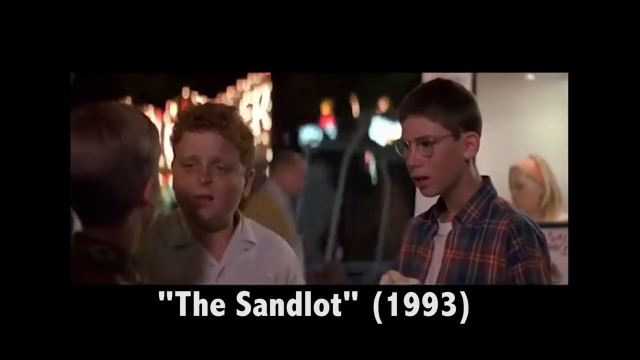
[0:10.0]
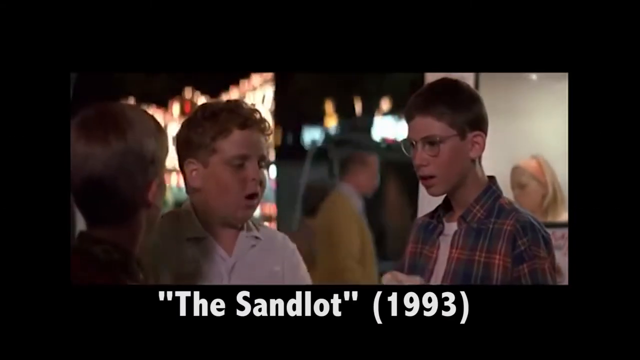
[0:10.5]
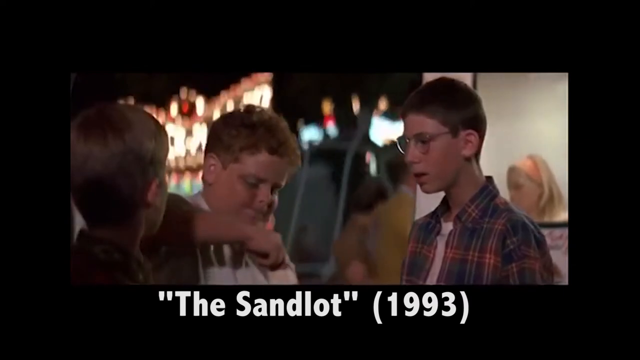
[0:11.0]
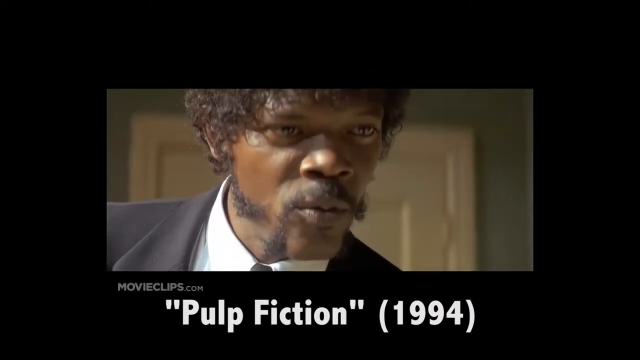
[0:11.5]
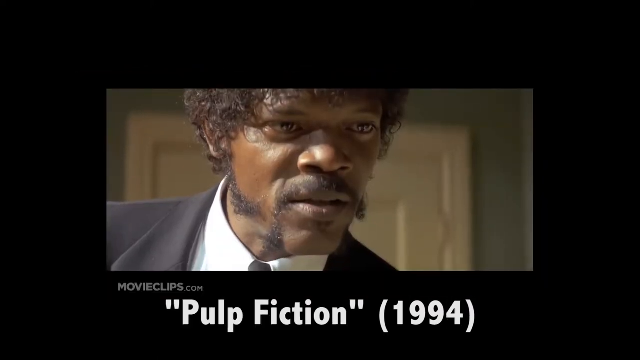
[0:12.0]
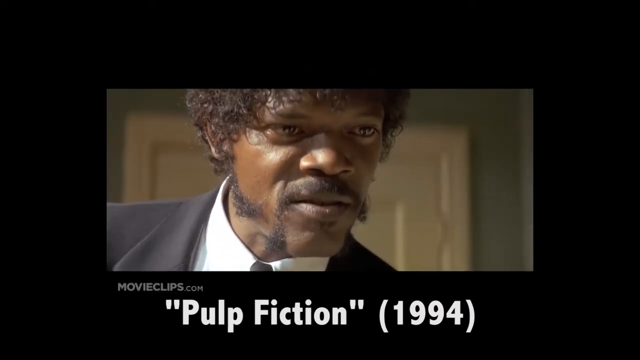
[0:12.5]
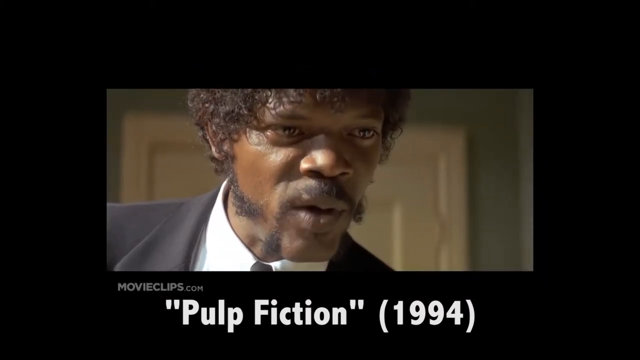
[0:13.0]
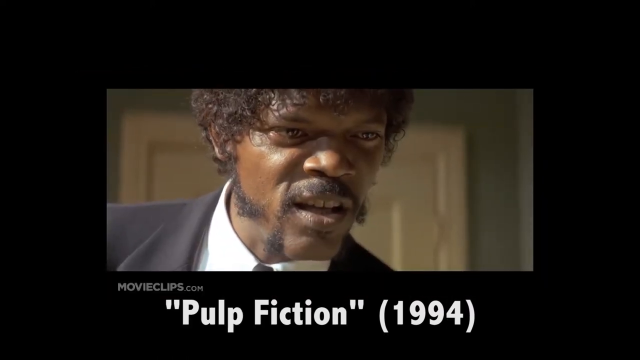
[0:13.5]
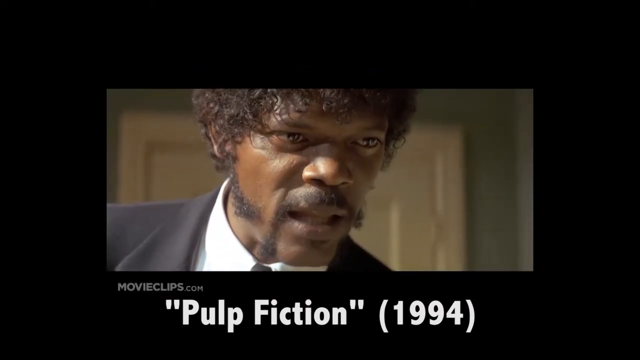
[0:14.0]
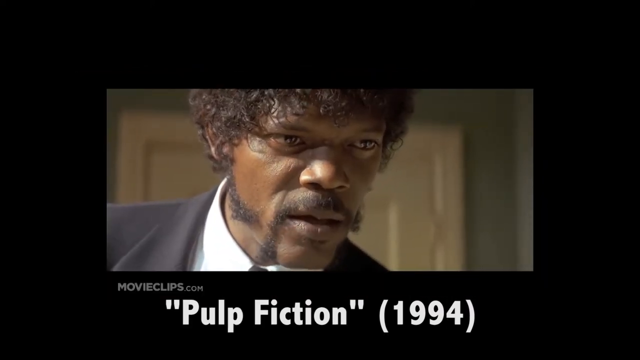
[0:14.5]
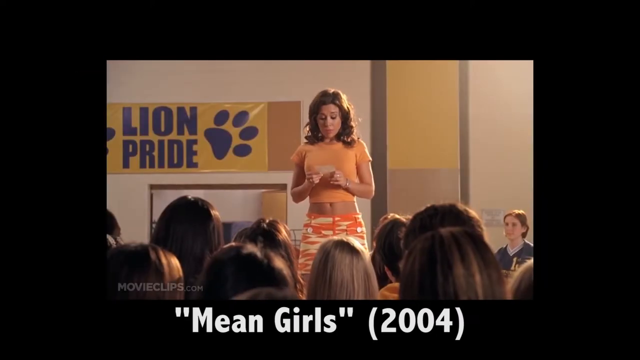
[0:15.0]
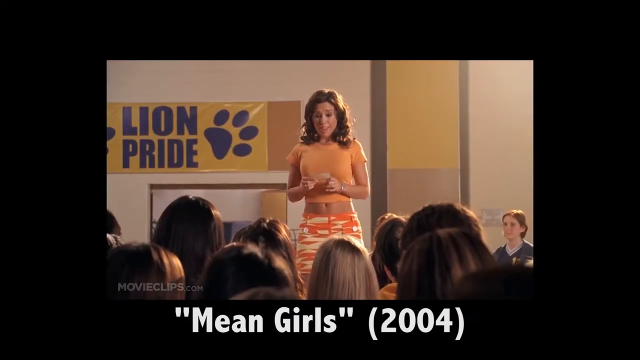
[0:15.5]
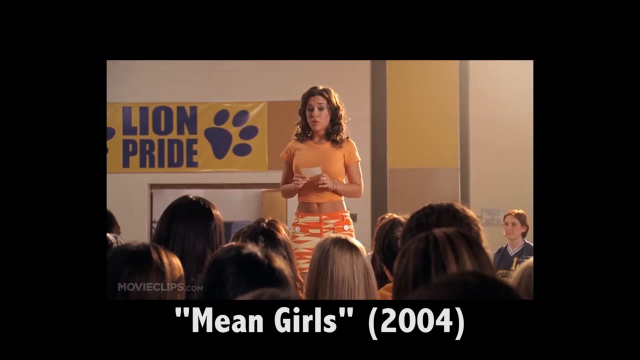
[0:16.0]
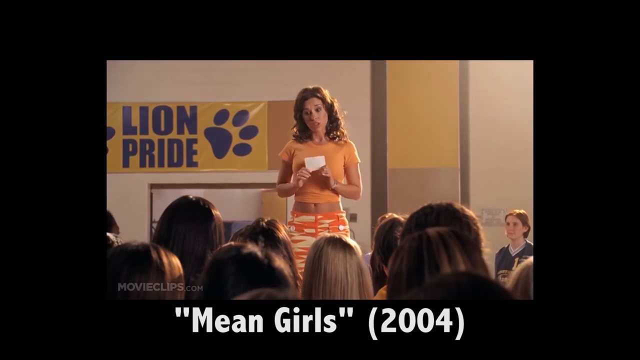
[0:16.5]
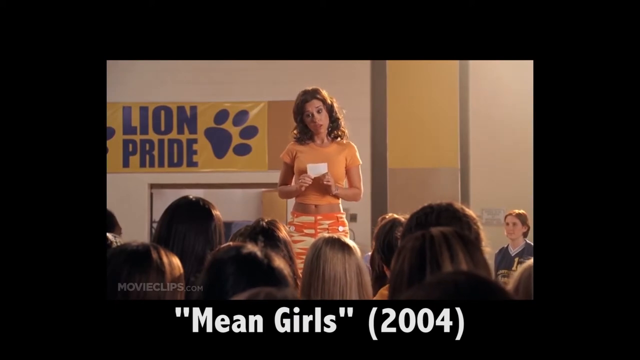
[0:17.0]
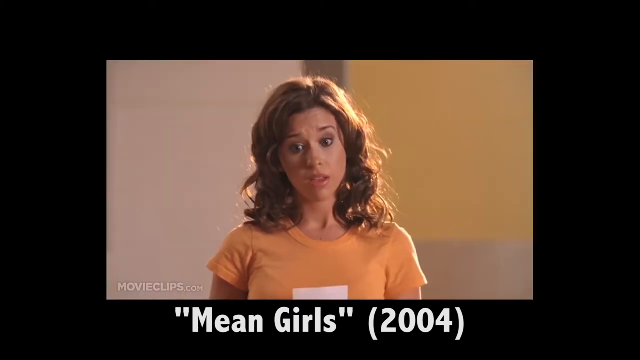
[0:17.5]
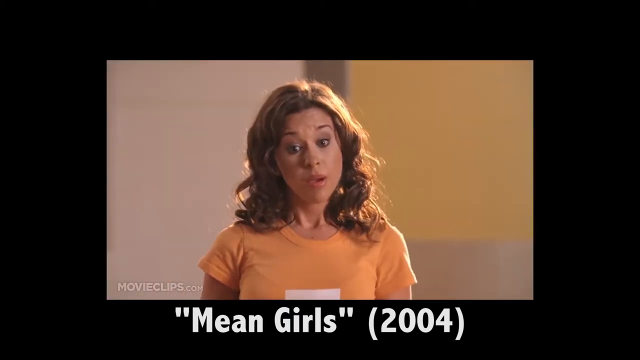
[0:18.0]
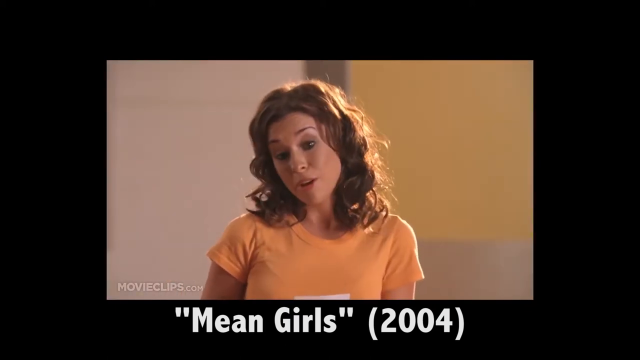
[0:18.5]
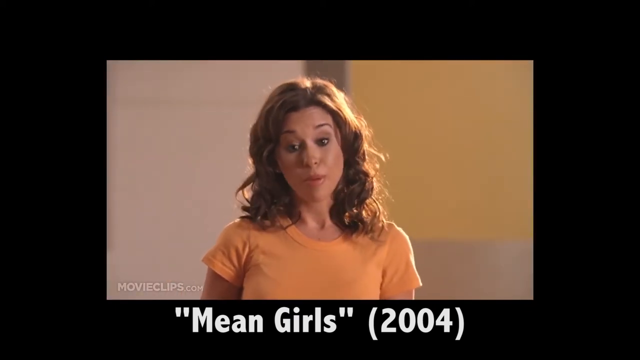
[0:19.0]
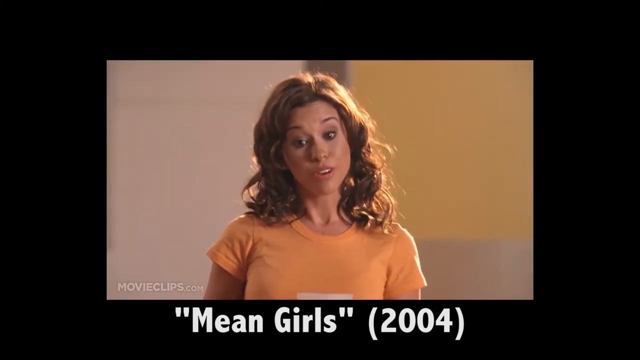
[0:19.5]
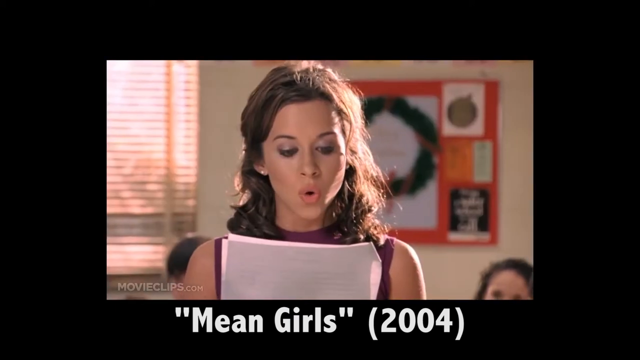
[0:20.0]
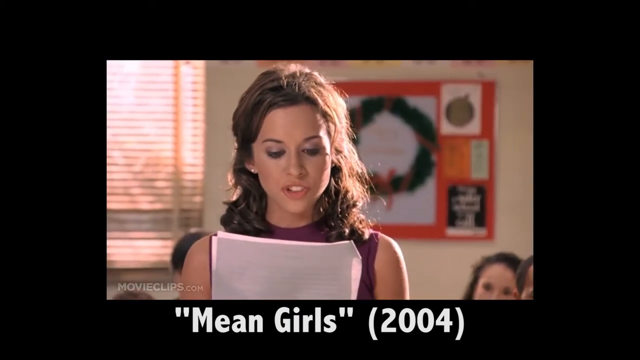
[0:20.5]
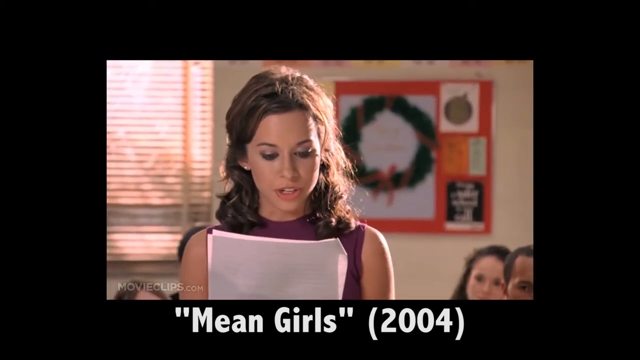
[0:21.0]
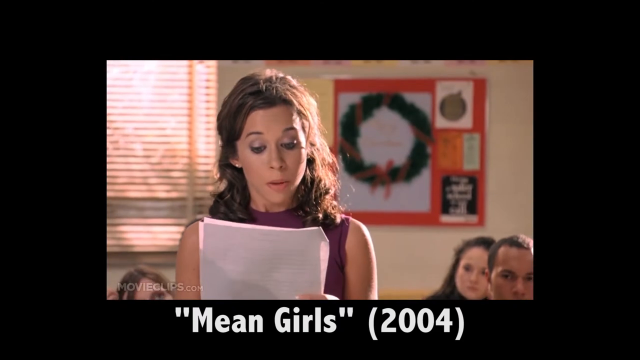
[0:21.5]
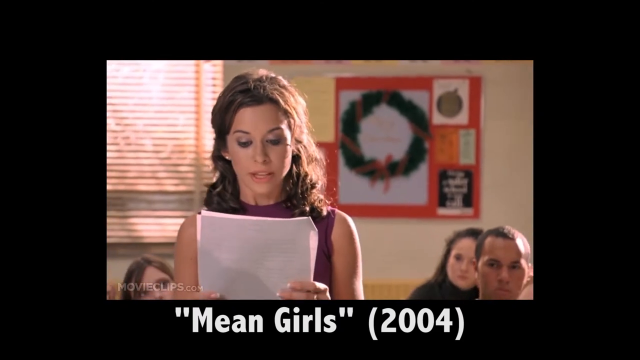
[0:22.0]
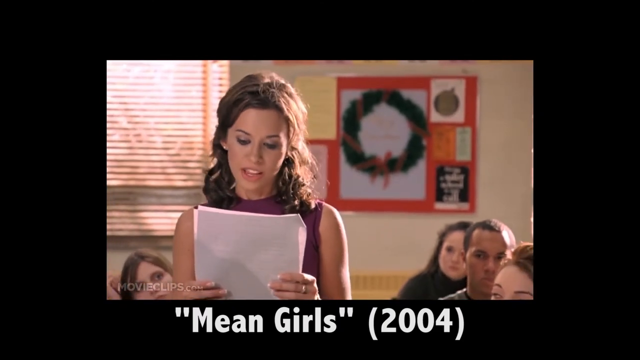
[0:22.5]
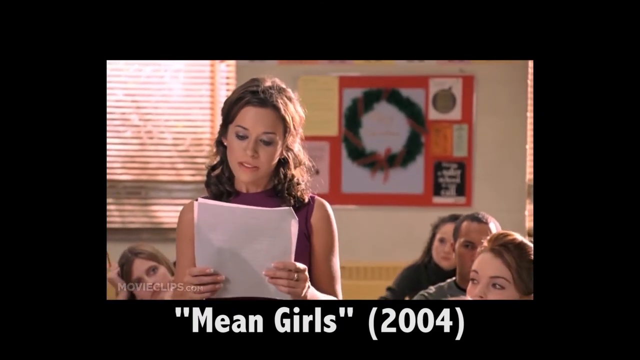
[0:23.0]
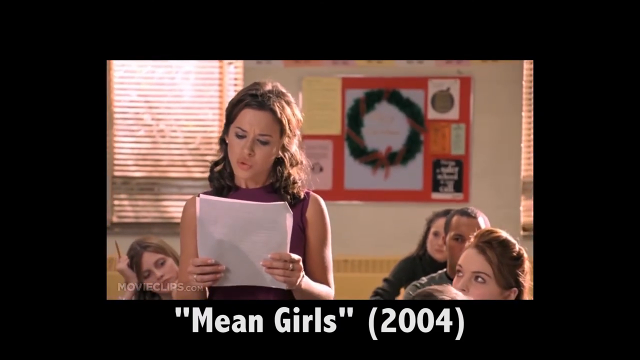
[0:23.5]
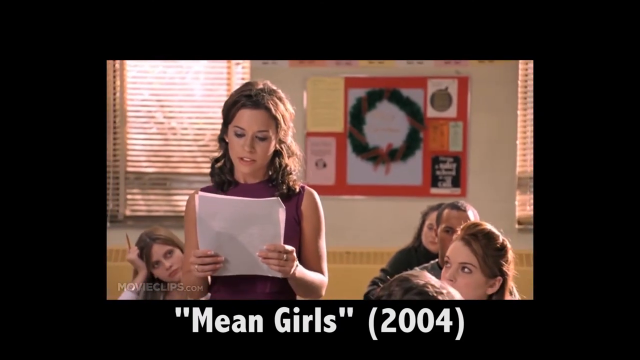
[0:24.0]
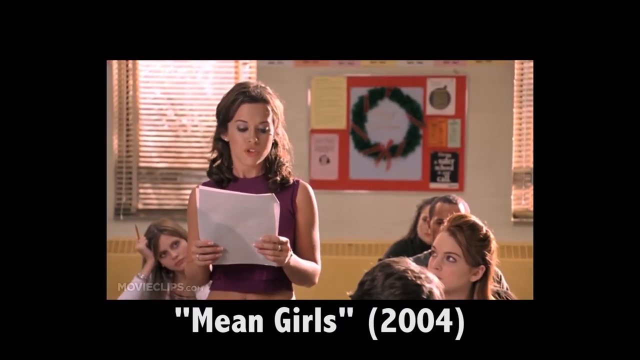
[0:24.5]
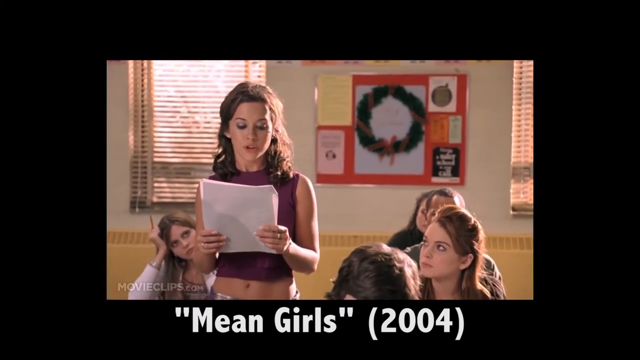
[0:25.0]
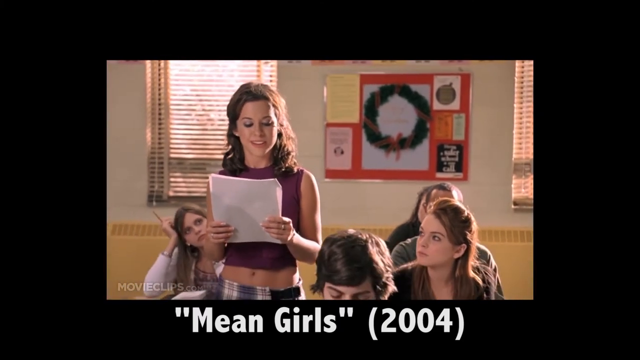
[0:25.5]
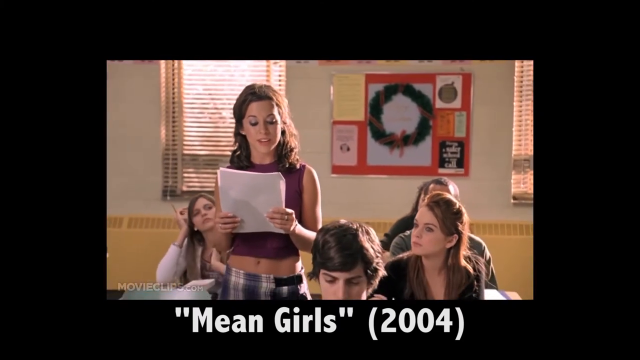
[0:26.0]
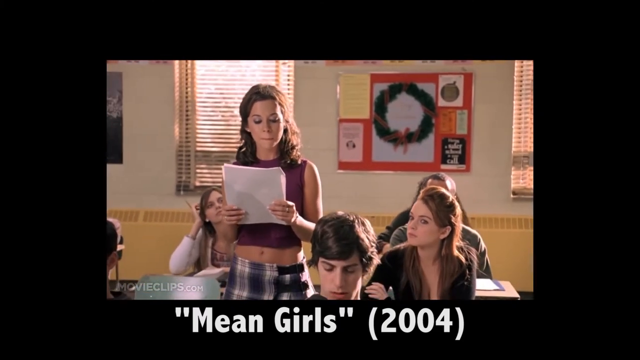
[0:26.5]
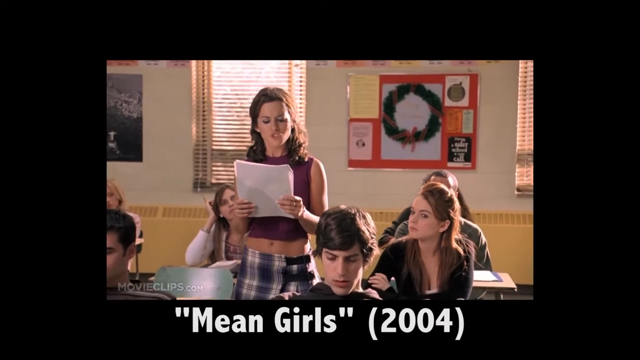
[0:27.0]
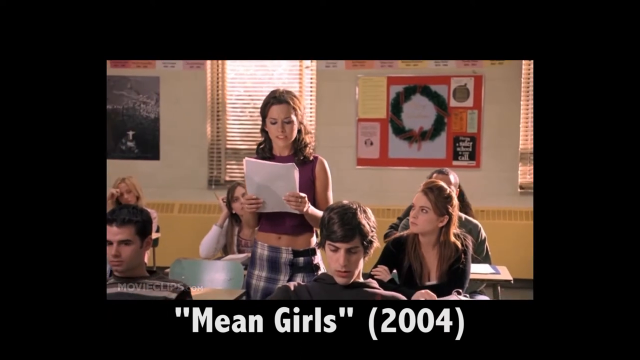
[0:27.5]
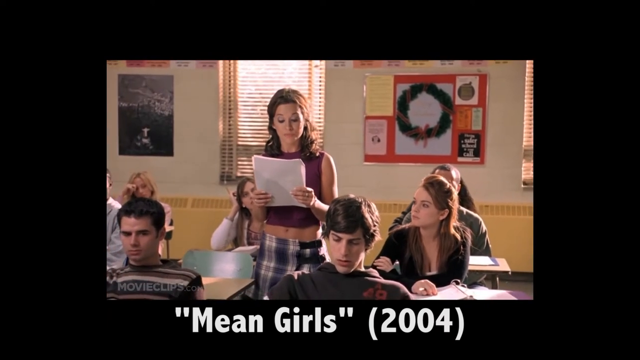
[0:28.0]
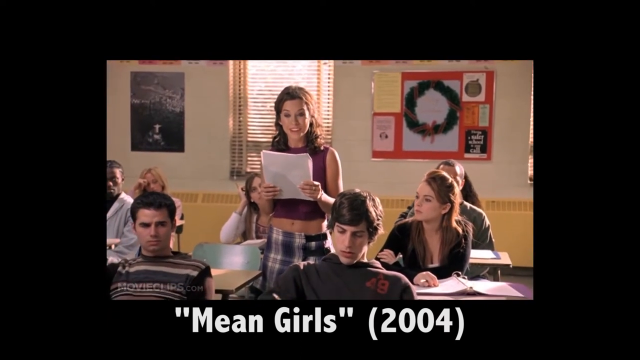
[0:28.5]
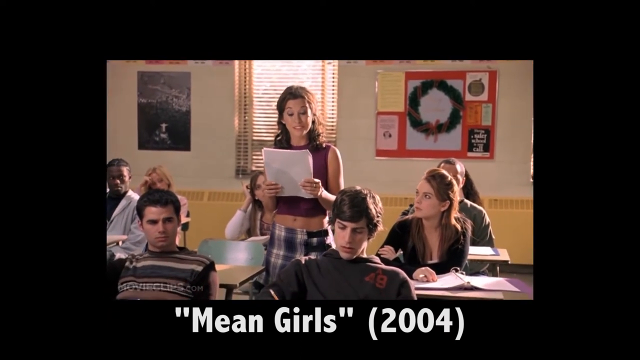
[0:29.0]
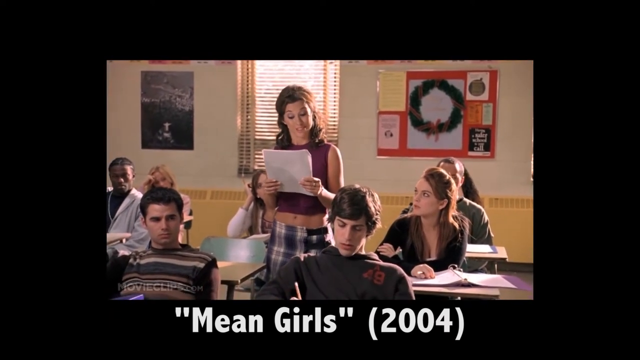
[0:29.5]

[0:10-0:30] Three young boys stand in an amusement park and seem to be conversing. The boy on the right has short dark brown hair, wears glasses and appears to be wearing a very colourful shirt. The boy beside him wears a white shirt and has light curly brown hair, and in front of him is another young boy with short brown hair in a red collared shirt. The next scene shows an old black man with a black beard and very curly hair who appears to be wearing a black suit; at the bottom it says "Pulp Fiction 1994". Another title at the bottom then reads "Mean Girls 2004", over a picture of a girl in an orange shirt and an orange skirt who is speaking to a group of people with long hair while holding a white card. A student wearing a purple shirt is then seen in a classroom, reading it out loud.